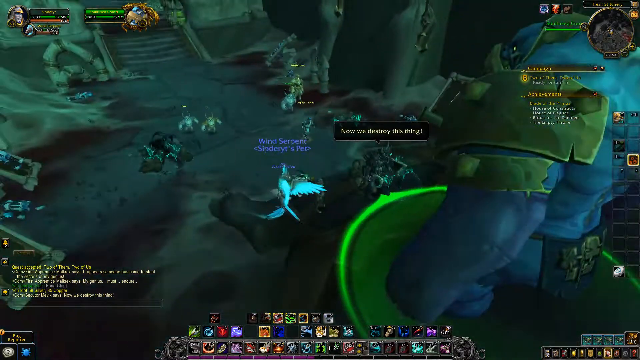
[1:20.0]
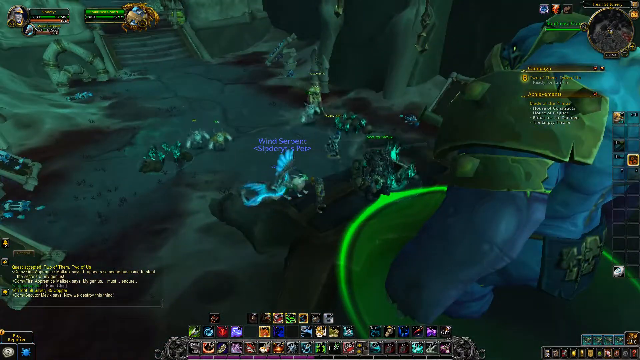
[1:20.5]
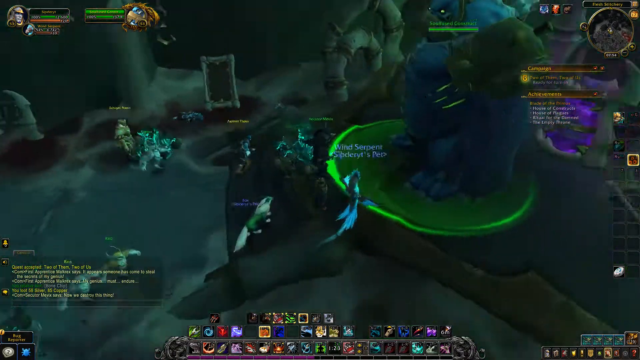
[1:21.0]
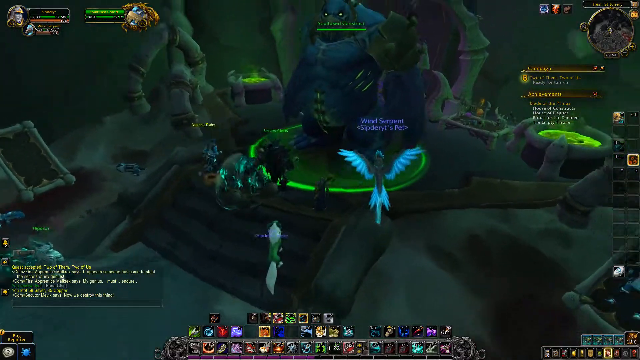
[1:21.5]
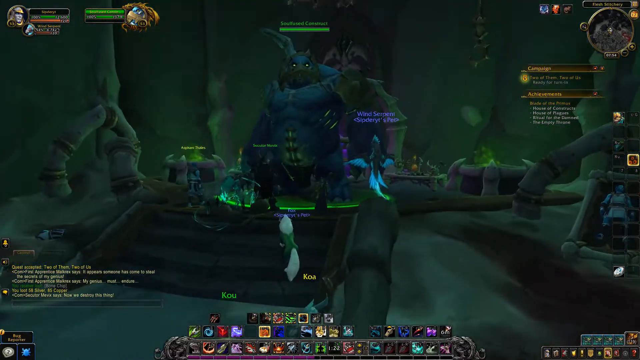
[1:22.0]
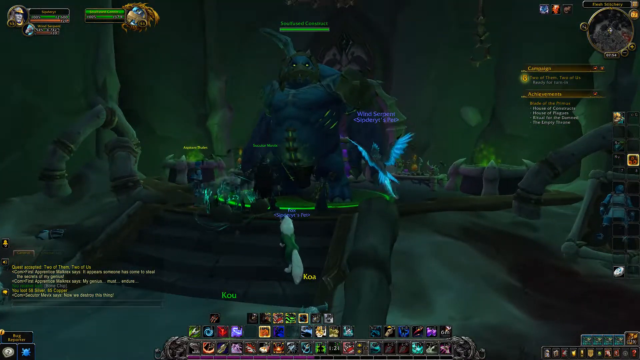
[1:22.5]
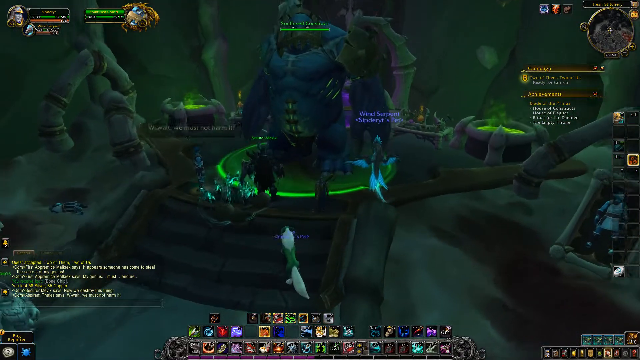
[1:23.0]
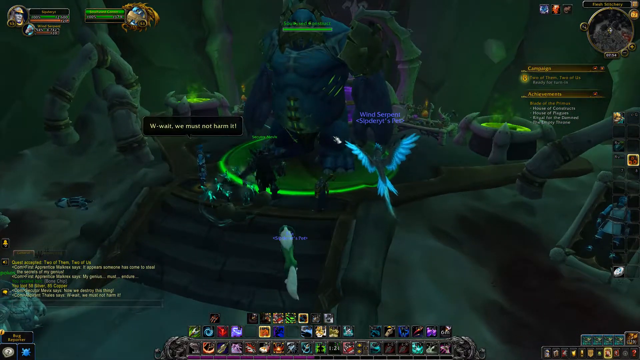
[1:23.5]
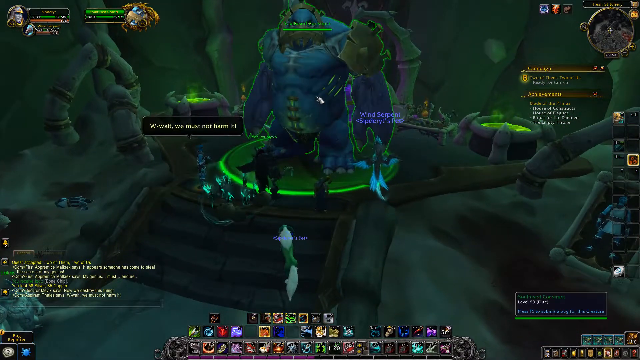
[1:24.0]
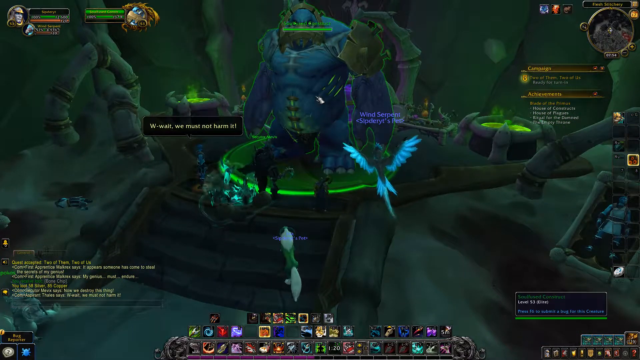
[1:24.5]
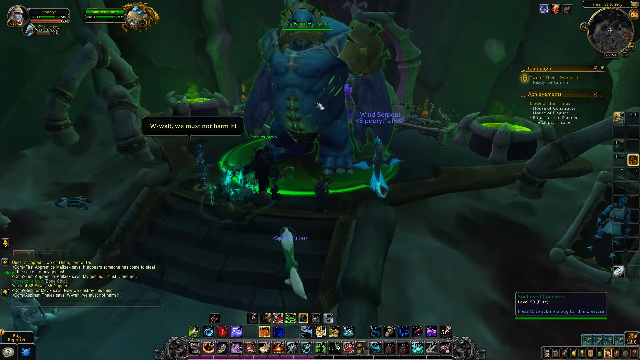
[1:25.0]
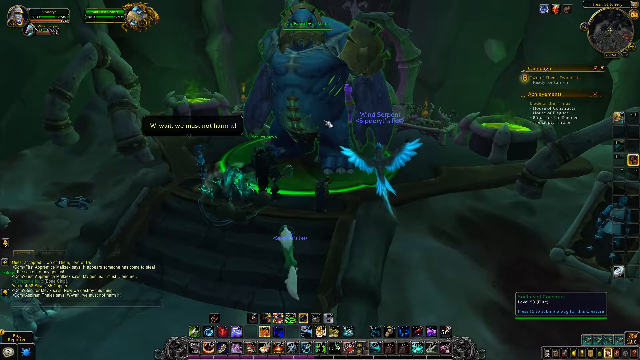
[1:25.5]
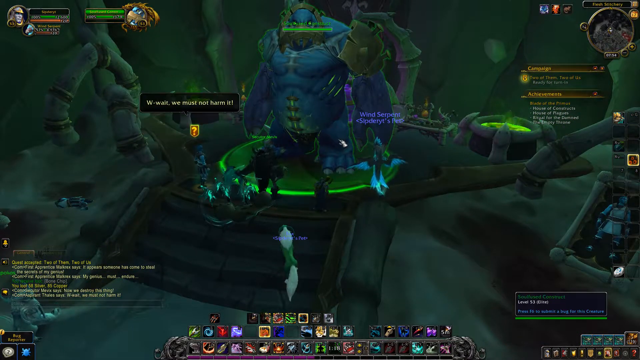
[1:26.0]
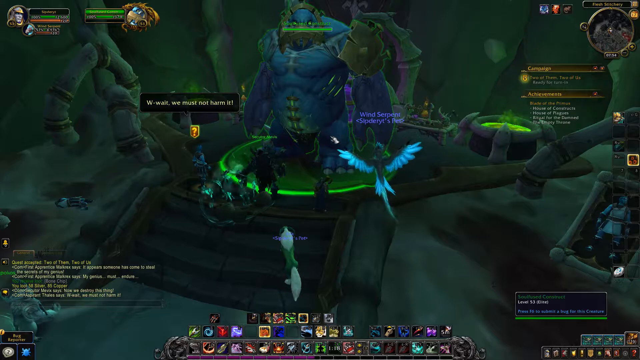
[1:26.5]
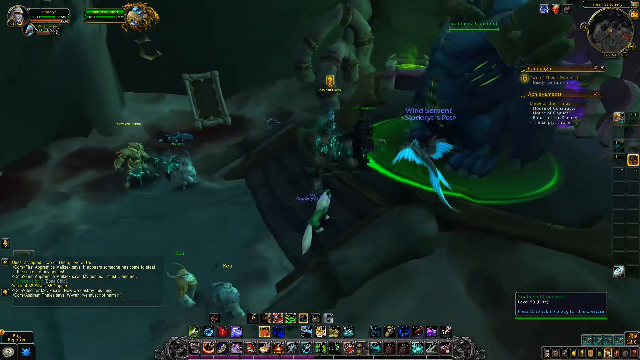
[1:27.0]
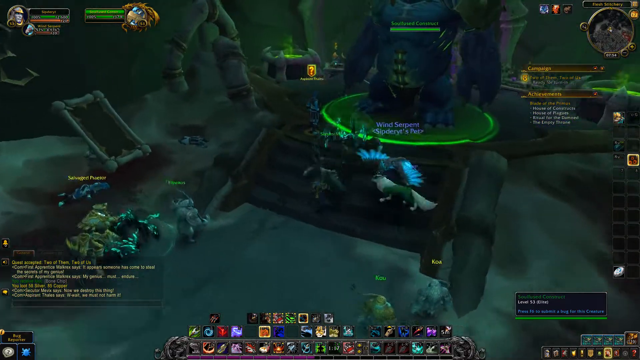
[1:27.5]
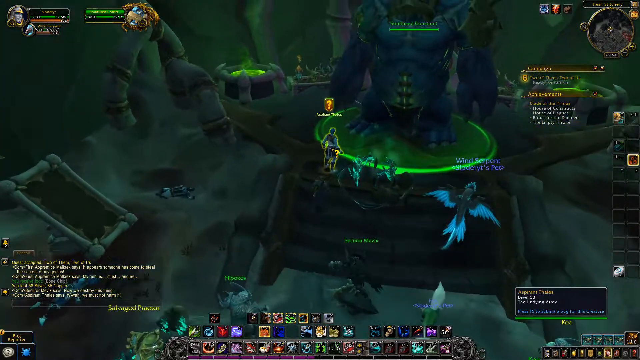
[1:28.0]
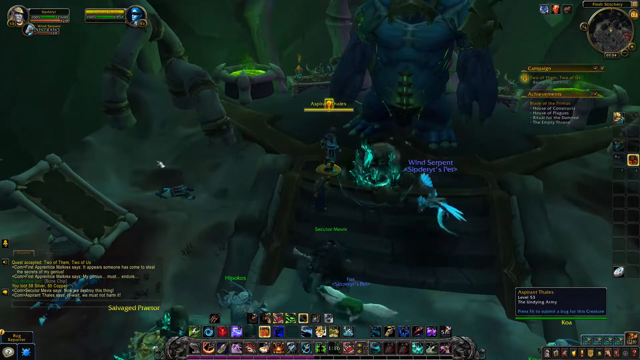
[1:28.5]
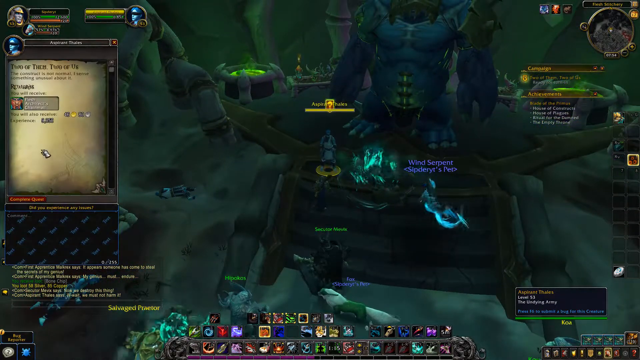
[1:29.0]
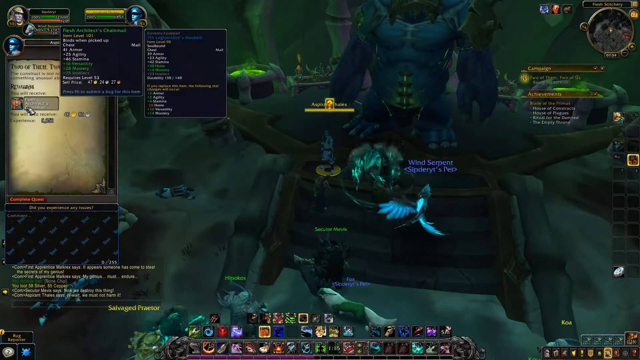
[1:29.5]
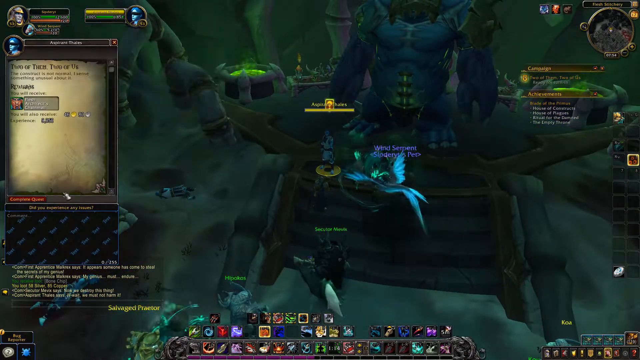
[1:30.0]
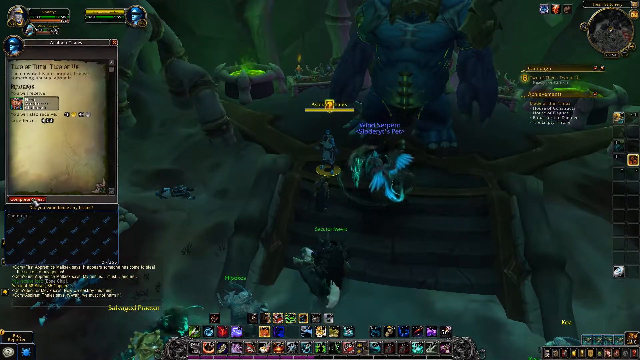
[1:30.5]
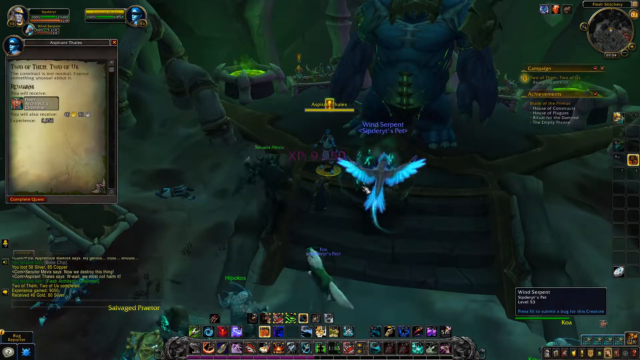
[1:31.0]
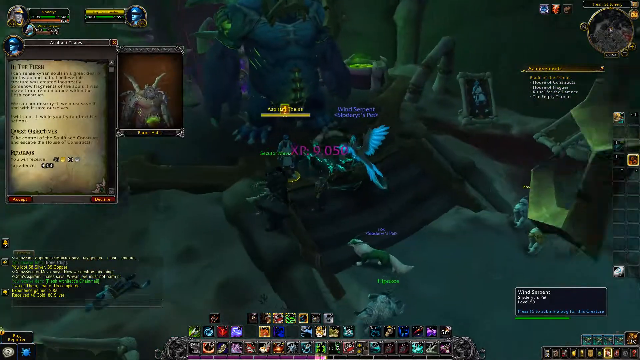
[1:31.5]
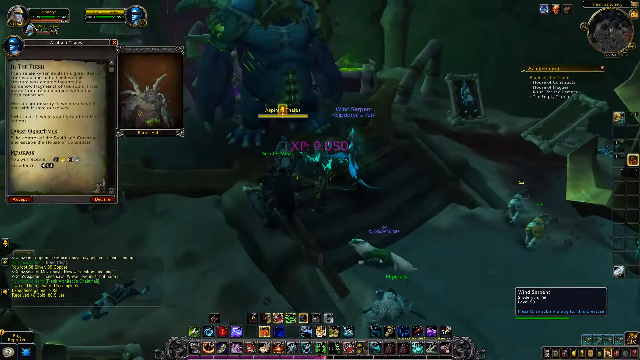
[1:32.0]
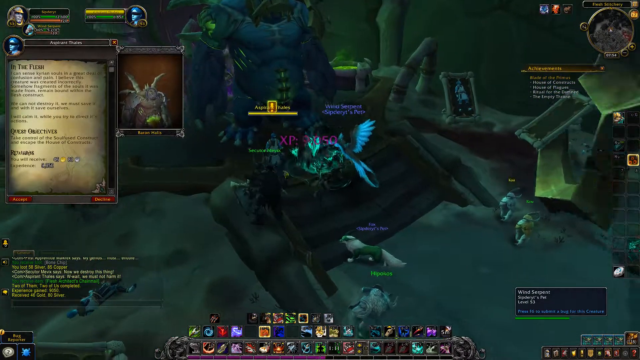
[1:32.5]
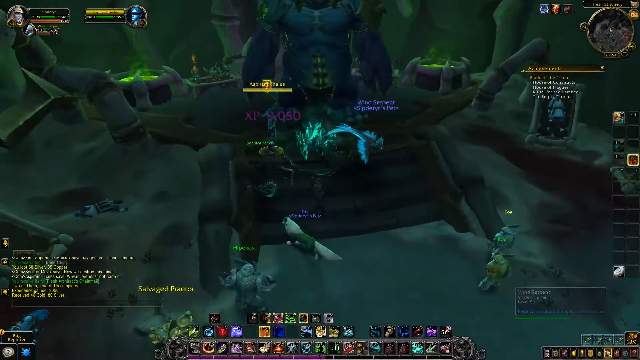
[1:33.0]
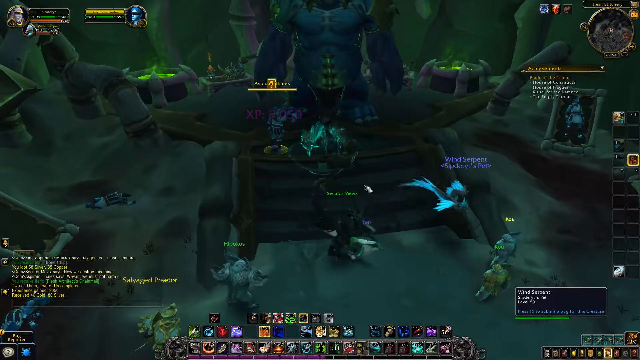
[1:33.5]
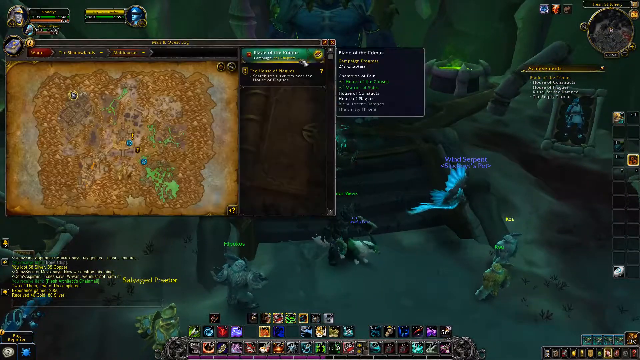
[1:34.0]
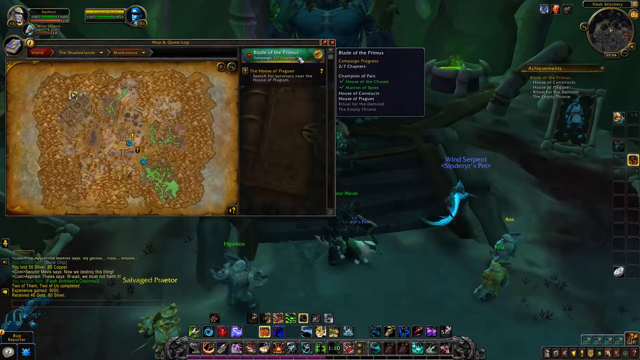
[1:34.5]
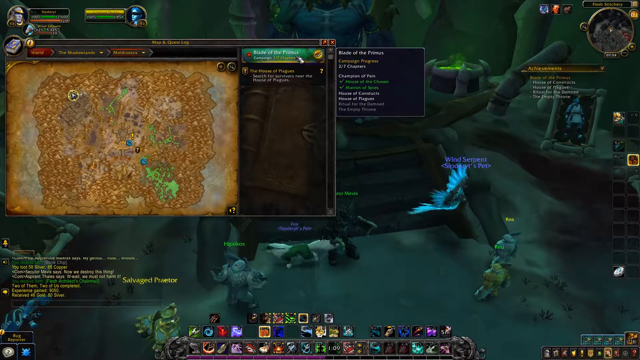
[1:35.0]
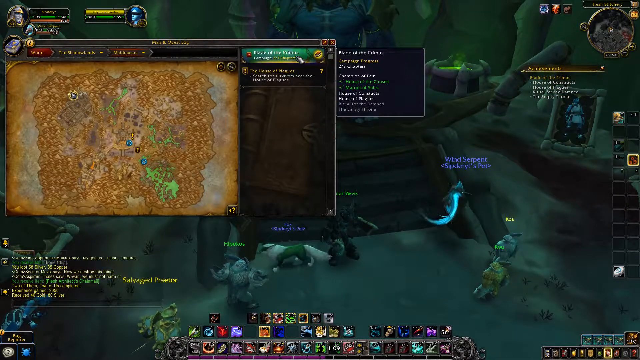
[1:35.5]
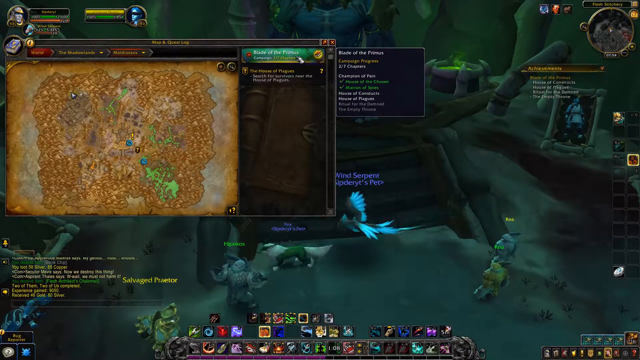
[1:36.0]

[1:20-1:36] The little magician is about to take on the big giant and is now in control of a lot of animals, maybe five. They move over and look at a map, but no fighting starts. Having reached the top stage, they face the big blue giant standing right in the middle, but they do not engage, and the blue giant does not move at all.